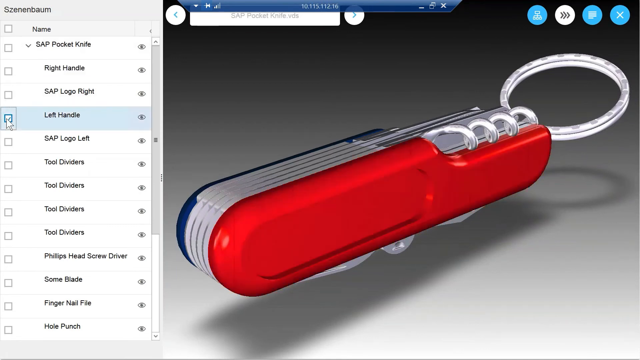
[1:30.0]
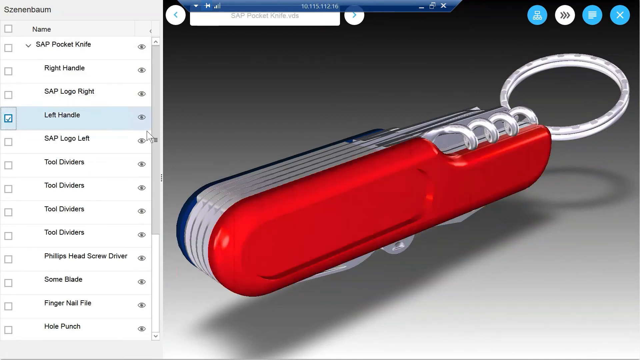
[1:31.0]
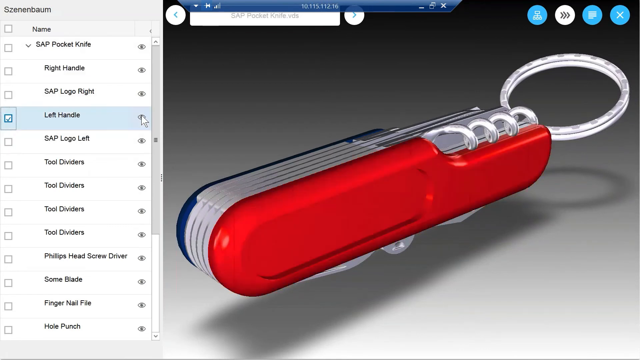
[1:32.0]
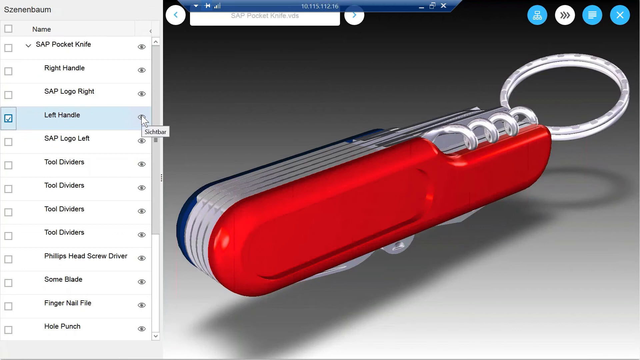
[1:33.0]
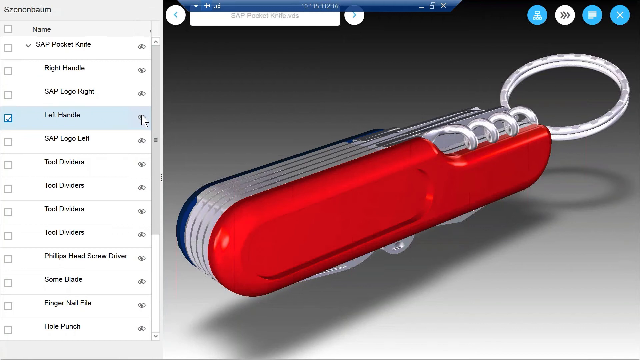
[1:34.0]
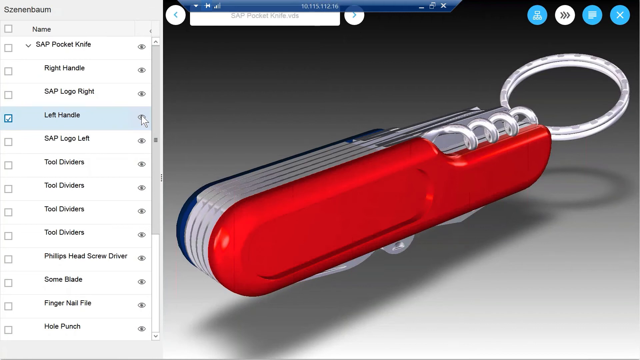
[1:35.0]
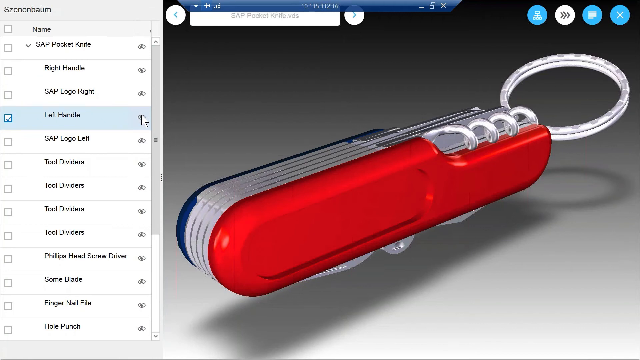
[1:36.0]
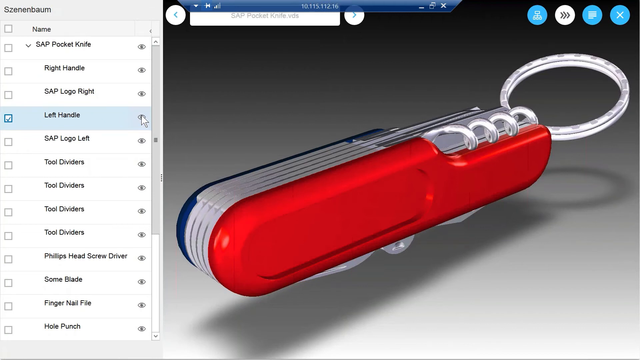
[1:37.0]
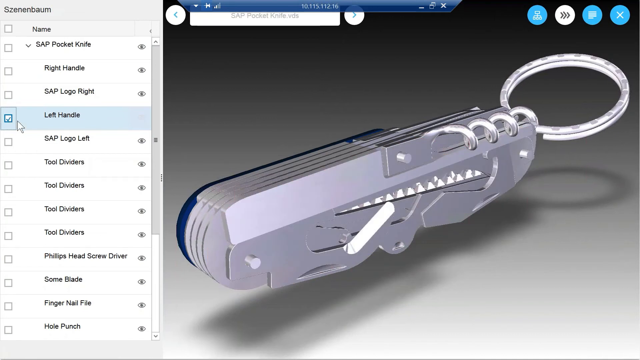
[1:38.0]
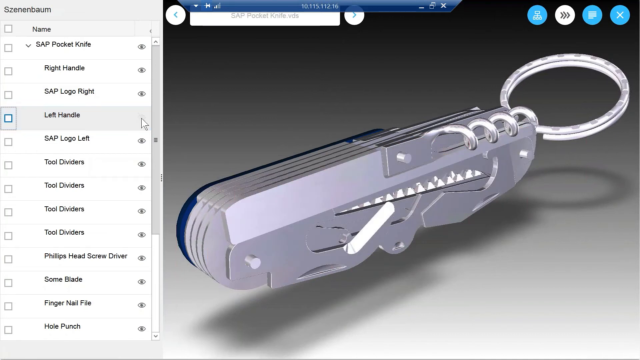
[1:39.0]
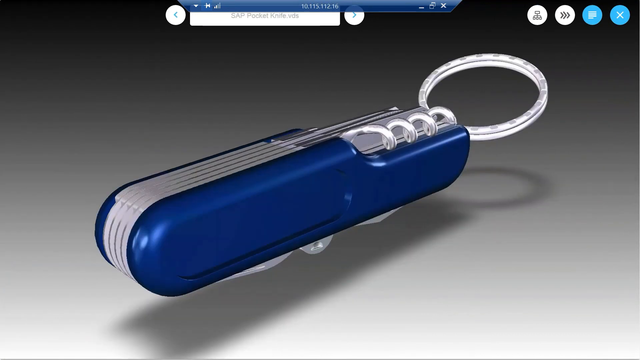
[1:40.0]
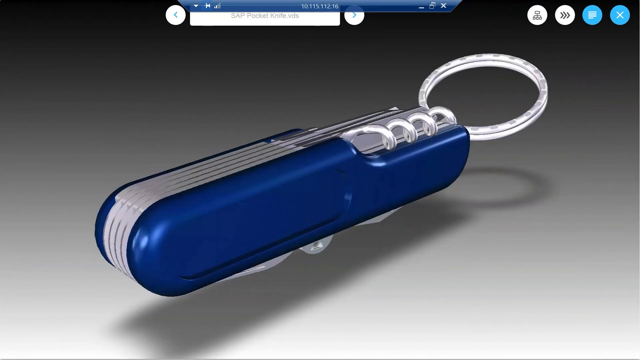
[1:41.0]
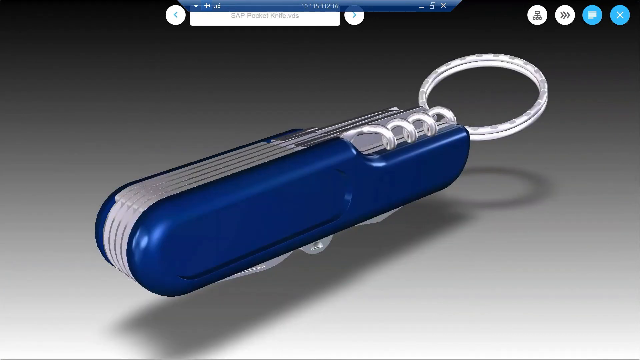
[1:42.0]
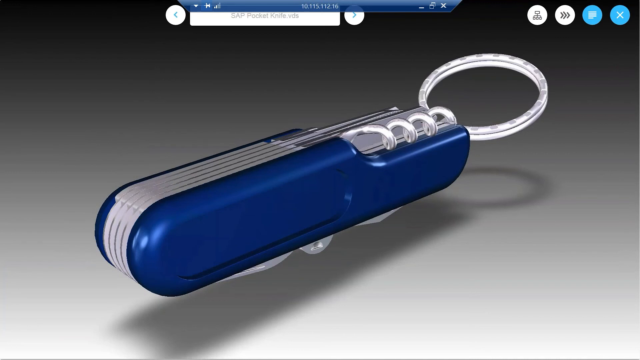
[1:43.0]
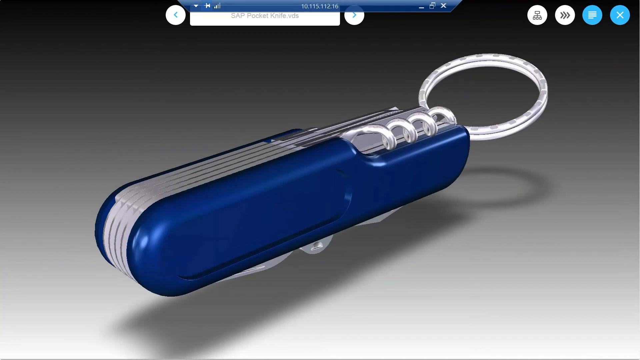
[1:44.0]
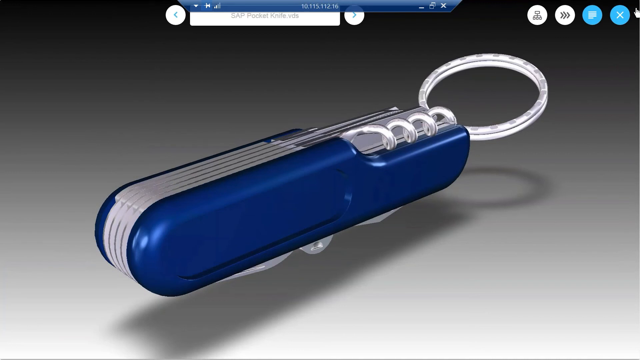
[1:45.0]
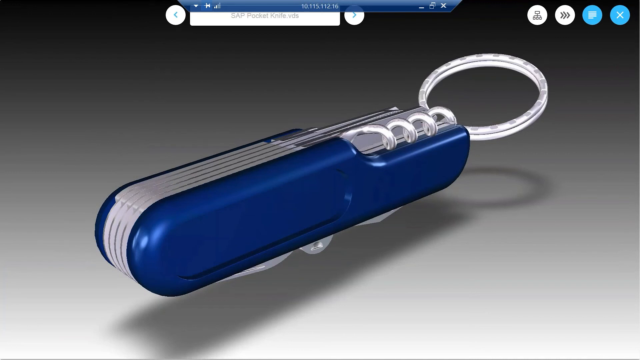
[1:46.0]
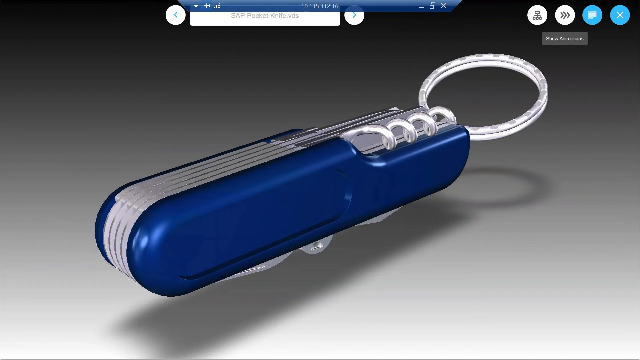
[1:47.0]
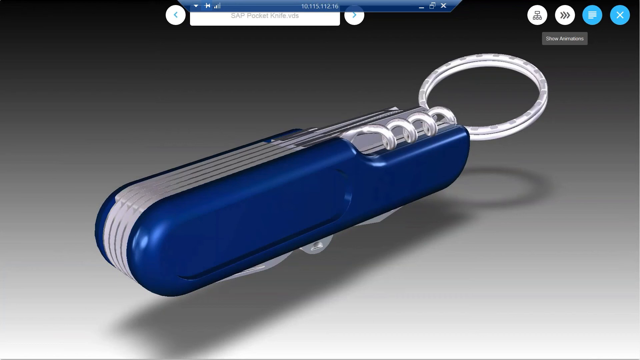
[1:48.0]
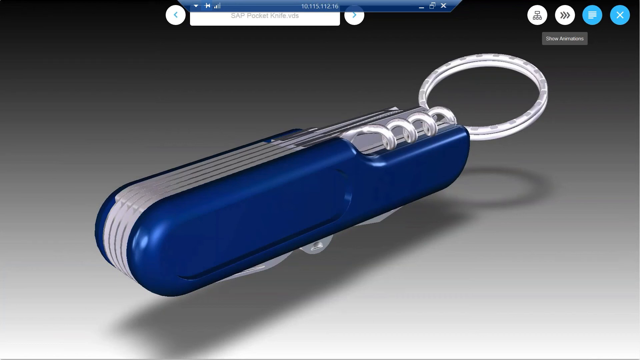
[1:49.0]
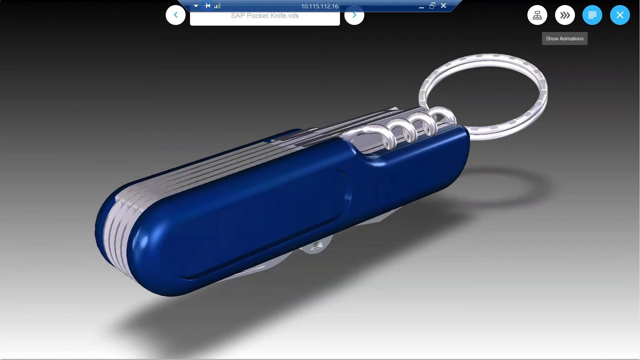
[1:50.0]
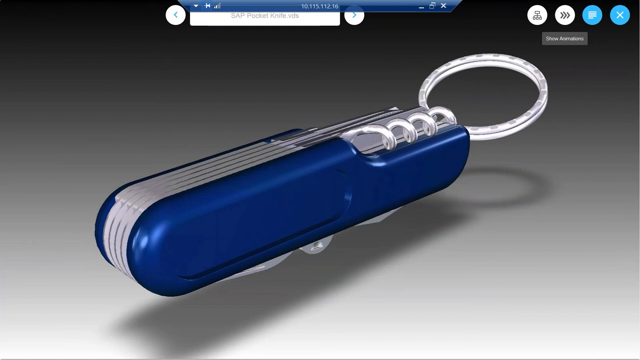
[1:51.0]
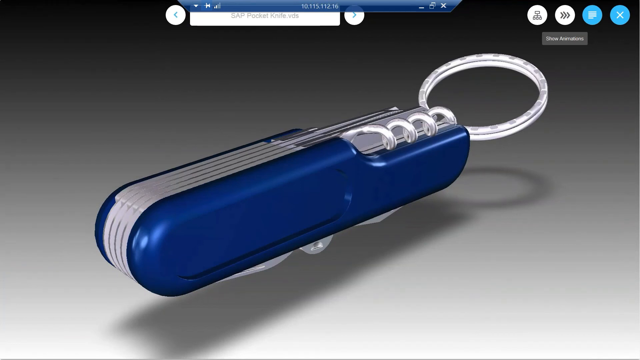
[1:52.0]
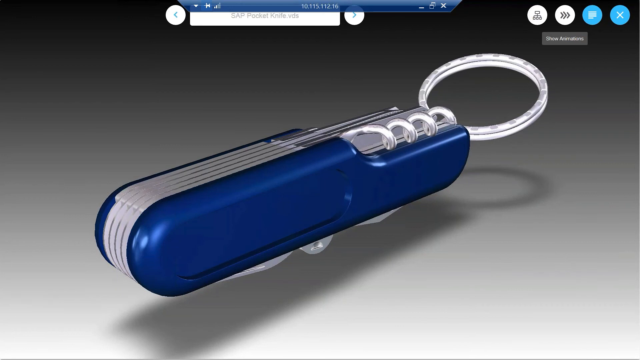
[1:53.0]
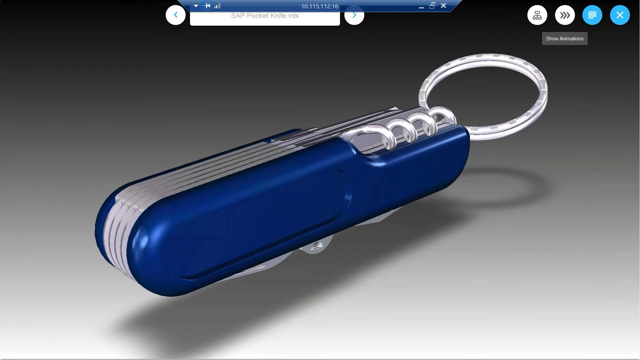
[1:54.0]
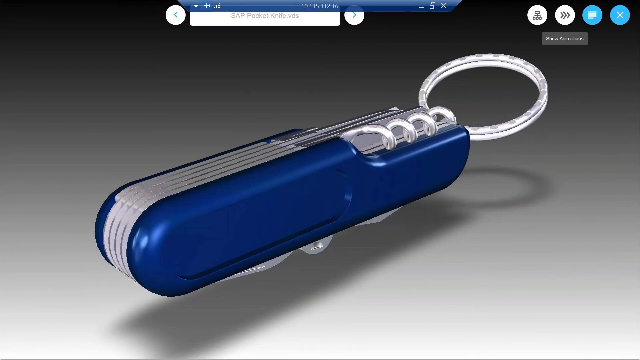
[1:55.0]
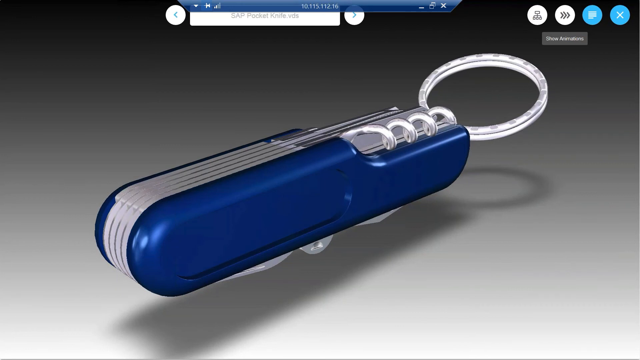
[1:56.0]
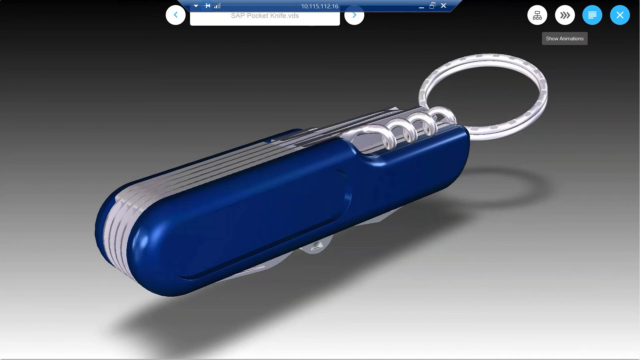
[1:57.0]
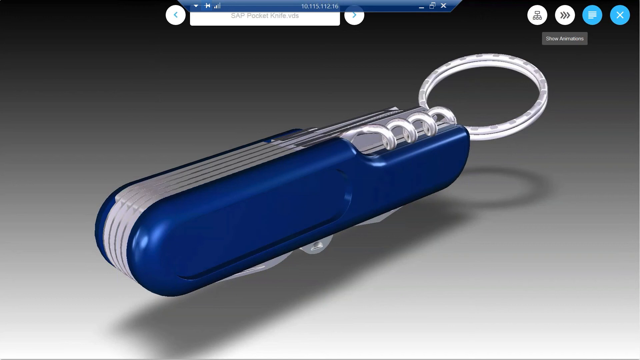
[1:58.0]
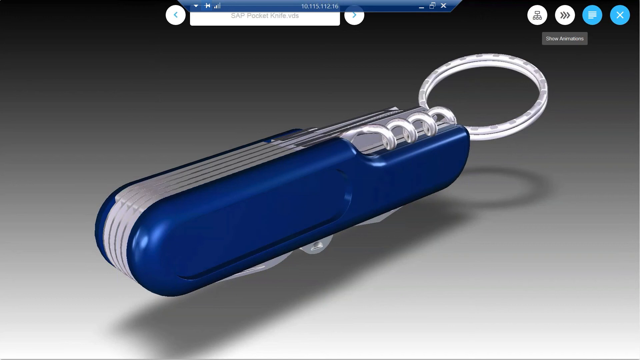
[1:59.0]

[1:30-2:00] A computer screen shows some kind of application with a file called "sap pocket knife.vds" loaded, displaying a digital 3D image of a pocketknife. On the left-hand side is a navigational-type window pane with multiple options, each with a checkbox next to it. The user has clicked the checkbox next to left handle, then selects the eye icon next to the left handle option. This hides the left handle from the 3D image so that the internal mechanisms of the pocket knife can be seen. The options on the left appear to allow the user to check, uncheck, hide and unhide each individual part of the pocket knife. It appears to be a tool used in some kind of production. A part highlights in red when it is selected.